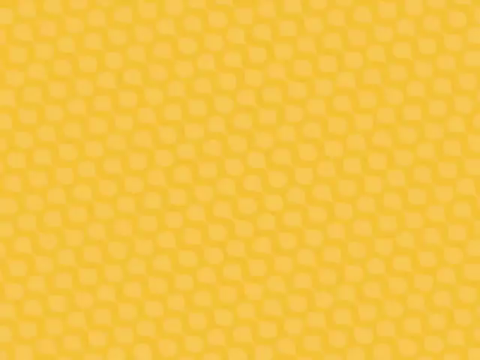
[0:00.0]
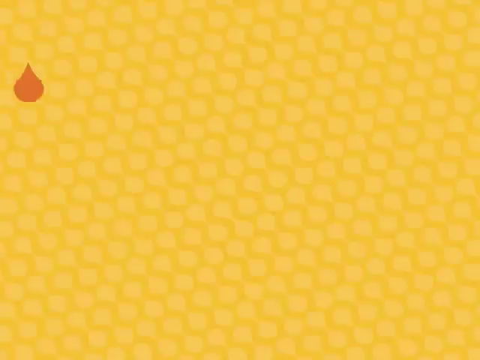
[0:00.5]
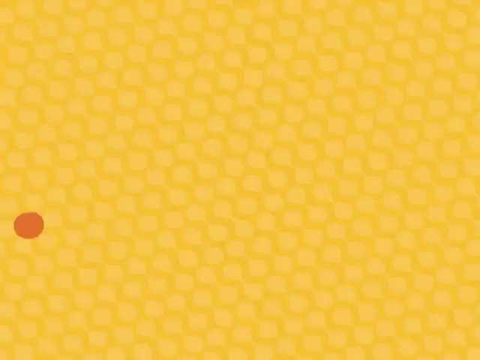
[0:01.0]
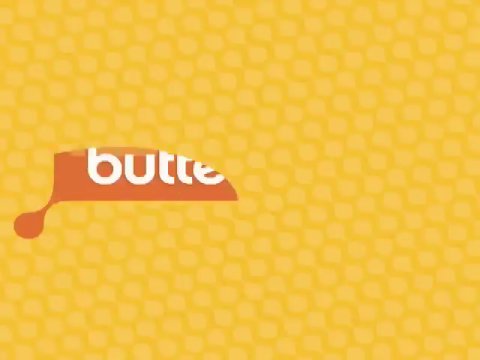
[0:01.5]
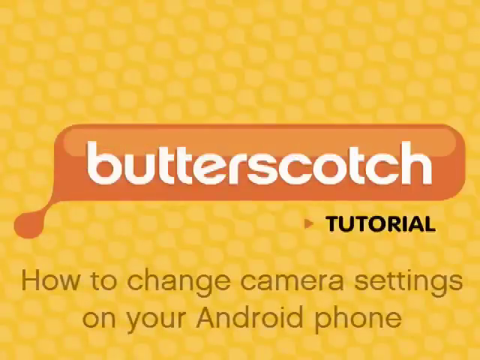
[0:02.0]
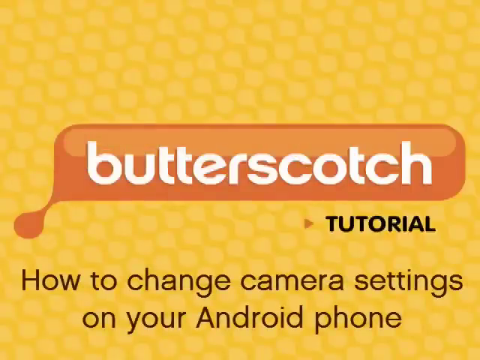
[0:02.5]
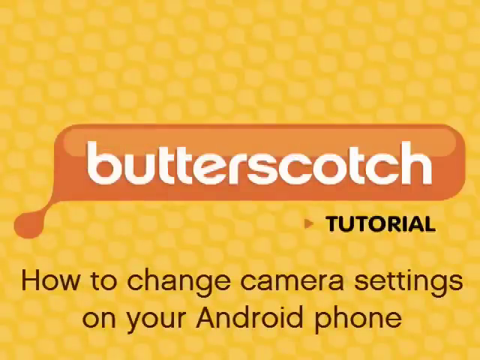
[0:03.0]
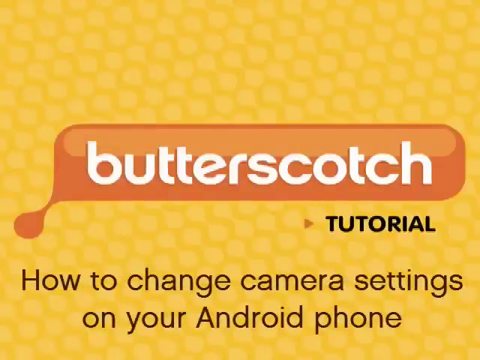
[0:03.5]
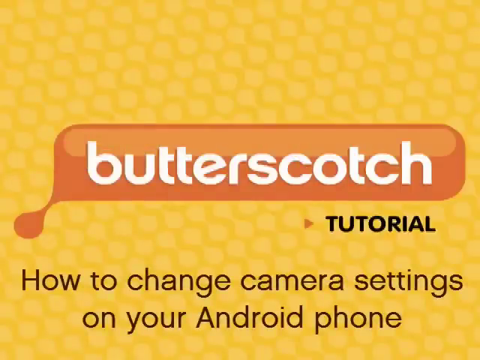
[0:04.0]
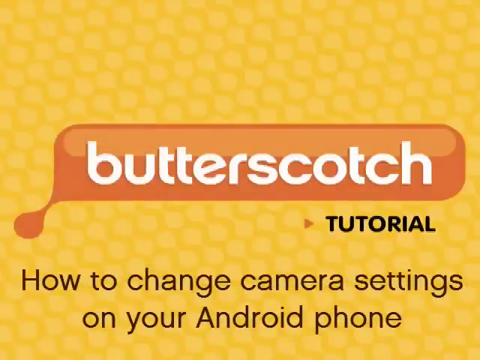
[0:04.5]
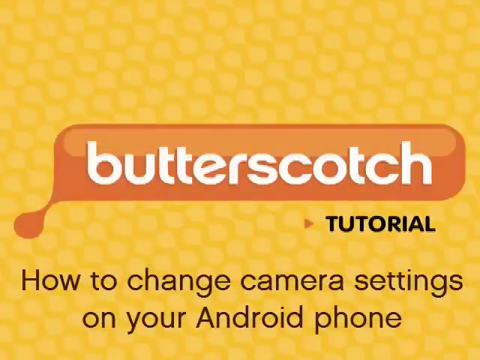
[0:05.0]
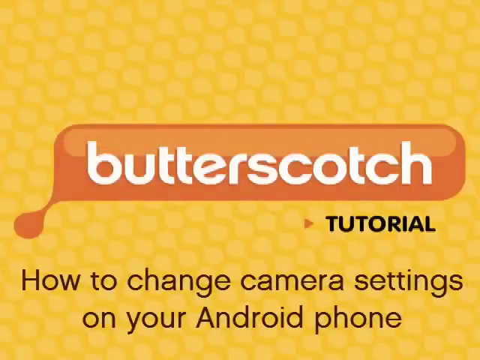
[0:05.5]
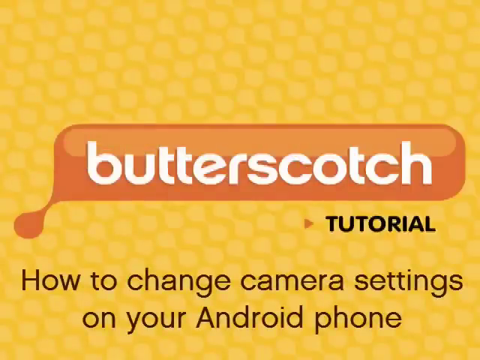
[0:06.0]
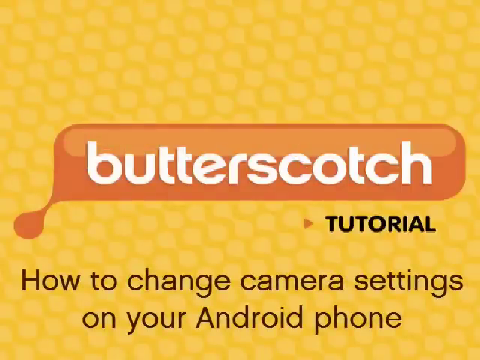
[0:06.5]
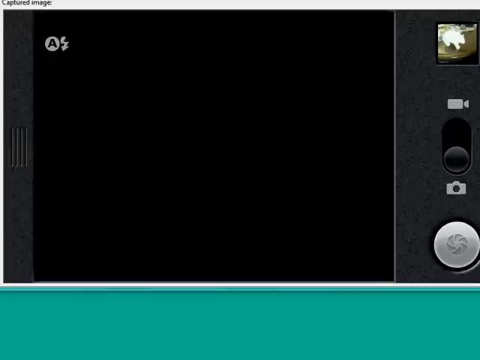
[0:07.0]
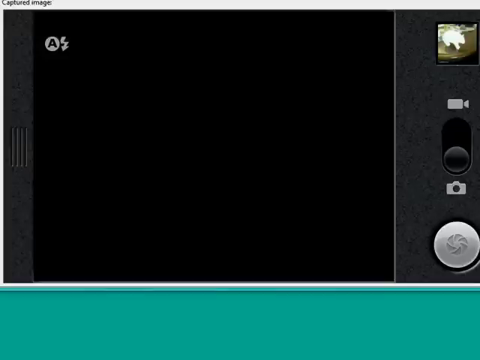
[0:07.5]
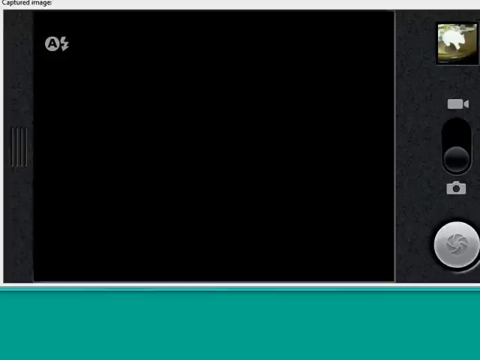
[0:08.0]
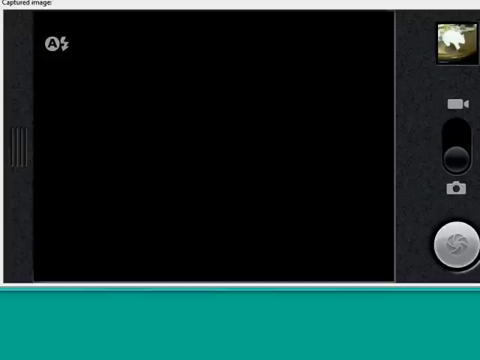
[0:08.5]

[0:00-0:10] The video opens on a yellow gold background covered in small circular dots connected one to the other, filling the entire page. A small brownish gold teardrop falls from the top of the screen toward the bottom, and when it reaches the lower two-thirds of the screen it stops and a thought bubble expands out, showing the word "butterscotch" in white font on a brown background. Underneath the butterscotch label is a tutorial button with an arrow next to it, and text at the bottom of the screen reads "how to change camera settings on your android phone." This text stays on screen for approximately four seconds before a transition brings a camera interface onto the screen.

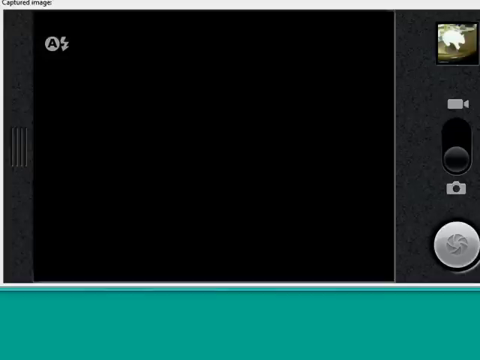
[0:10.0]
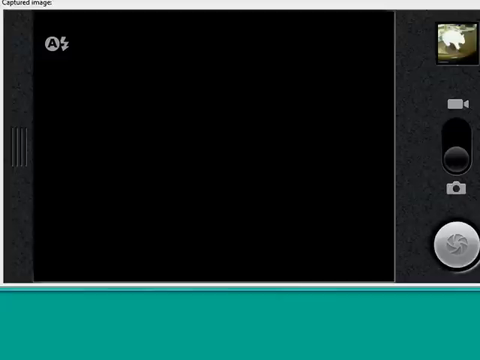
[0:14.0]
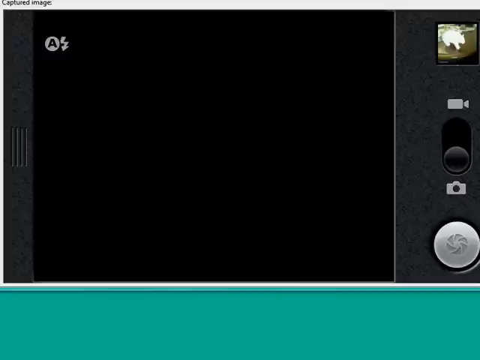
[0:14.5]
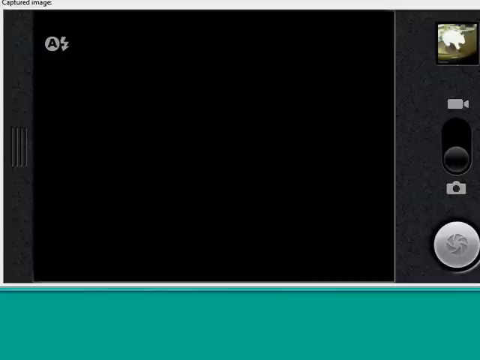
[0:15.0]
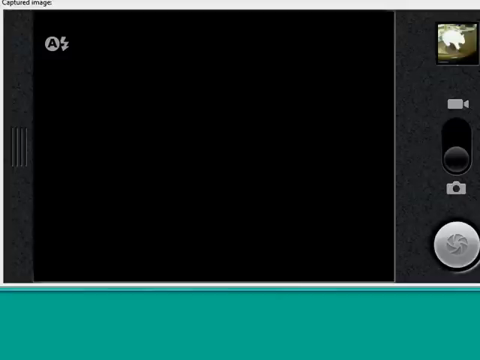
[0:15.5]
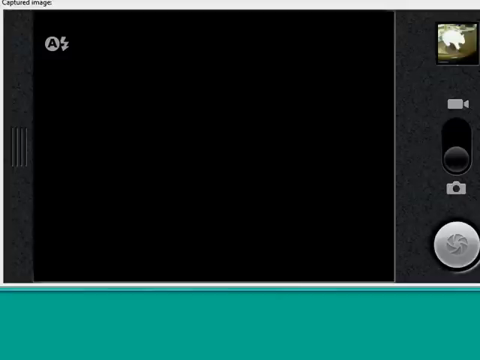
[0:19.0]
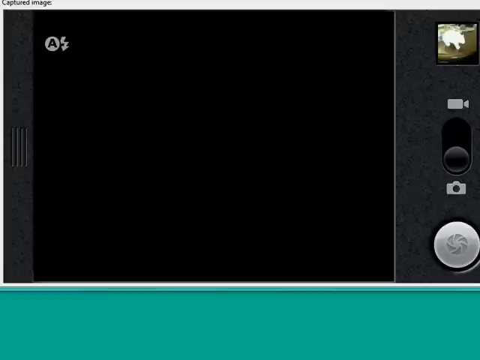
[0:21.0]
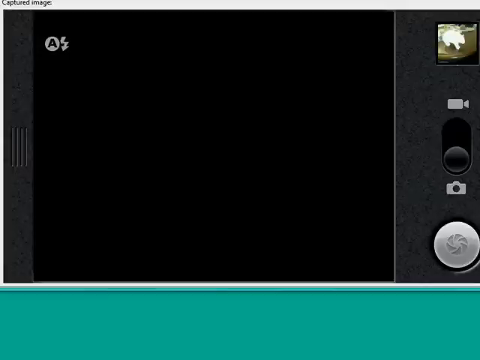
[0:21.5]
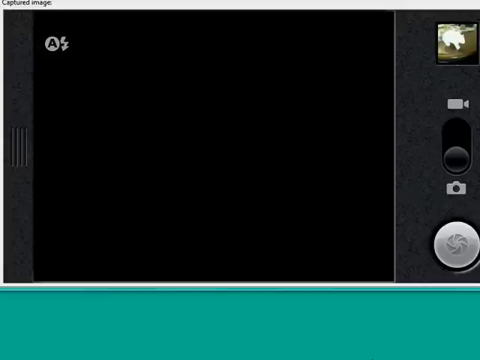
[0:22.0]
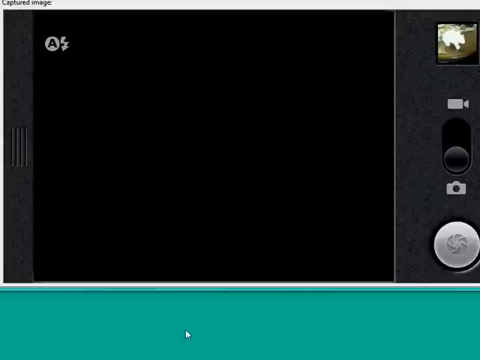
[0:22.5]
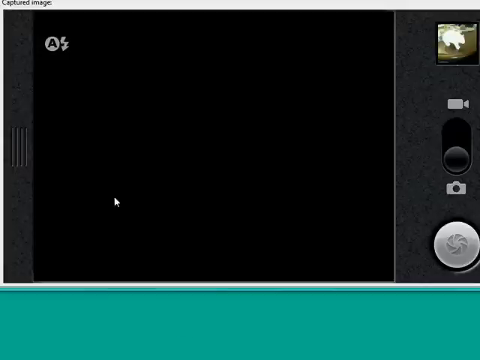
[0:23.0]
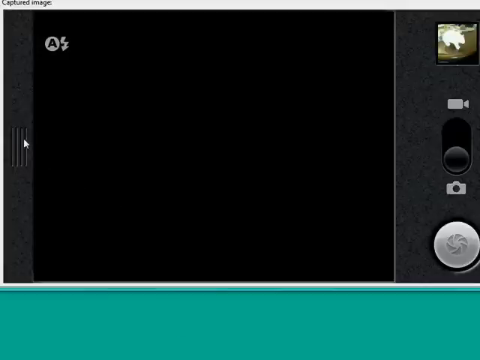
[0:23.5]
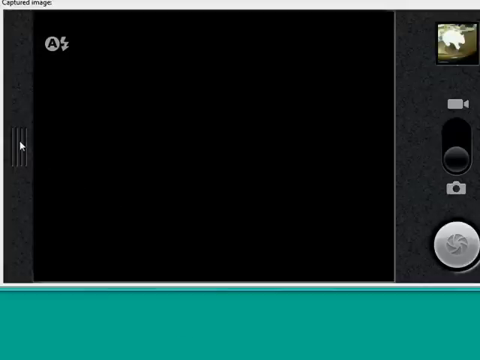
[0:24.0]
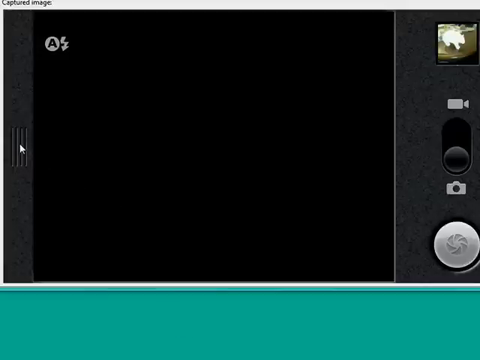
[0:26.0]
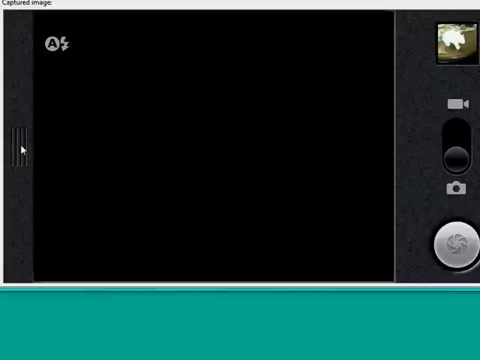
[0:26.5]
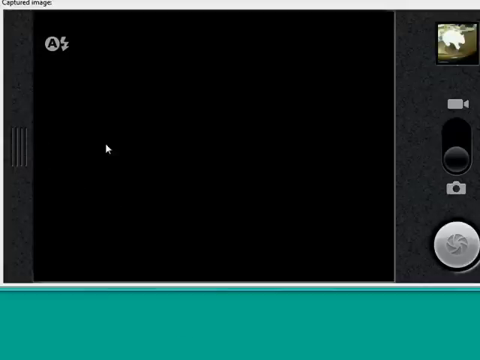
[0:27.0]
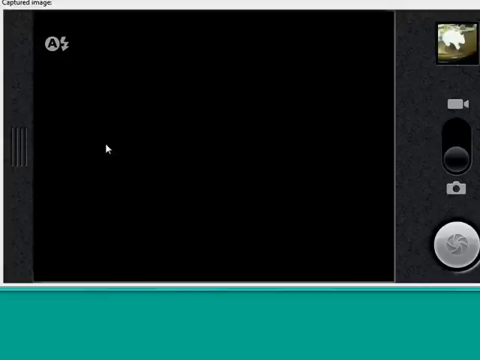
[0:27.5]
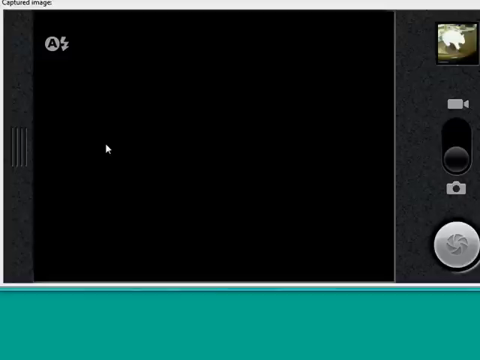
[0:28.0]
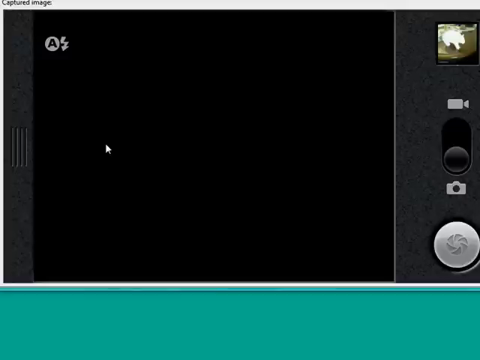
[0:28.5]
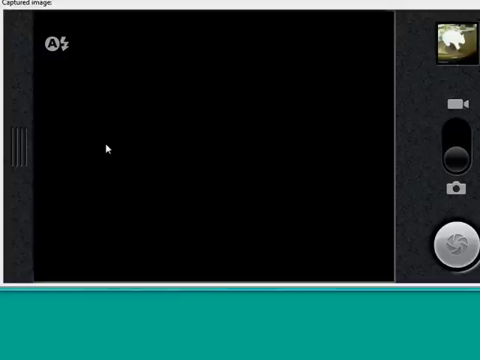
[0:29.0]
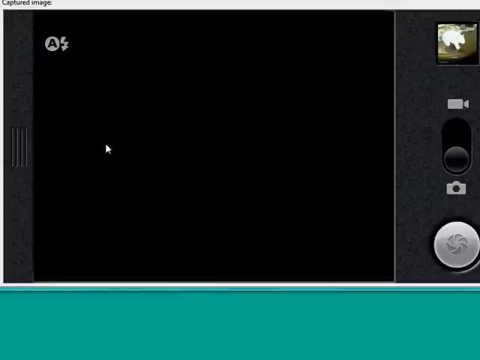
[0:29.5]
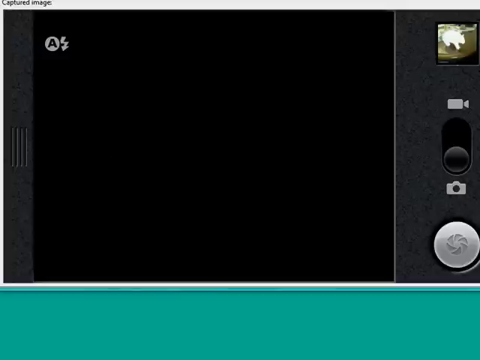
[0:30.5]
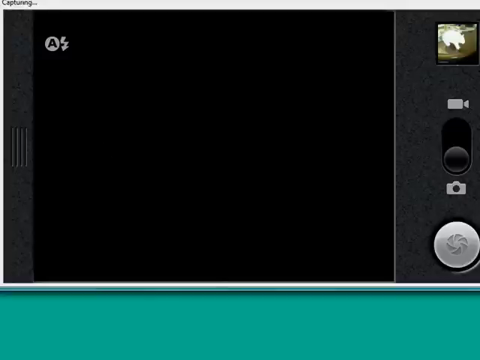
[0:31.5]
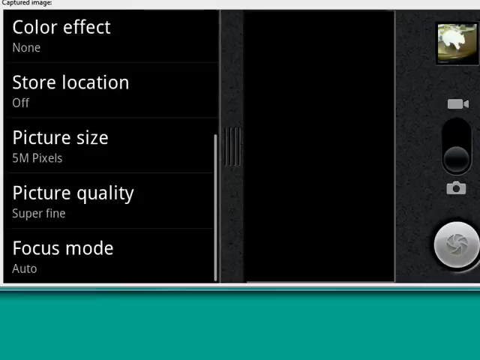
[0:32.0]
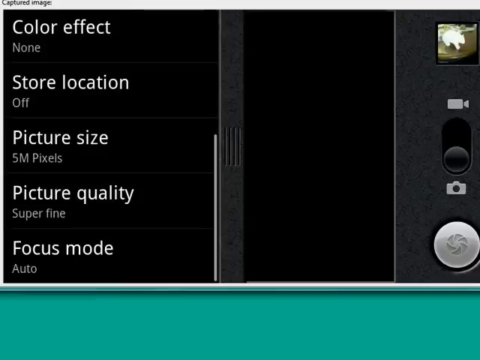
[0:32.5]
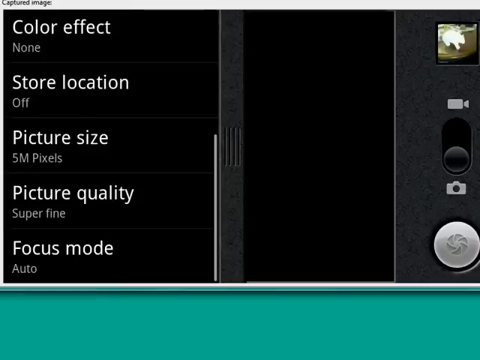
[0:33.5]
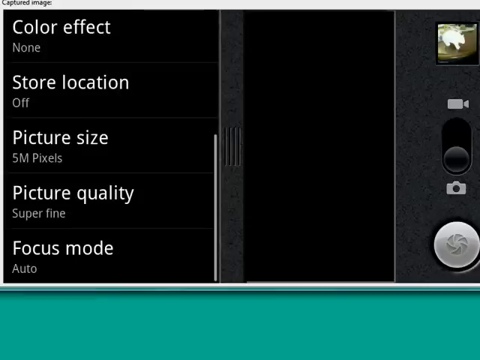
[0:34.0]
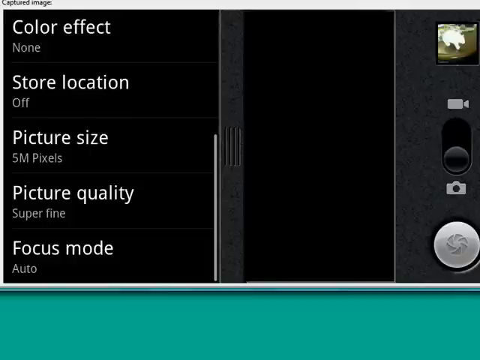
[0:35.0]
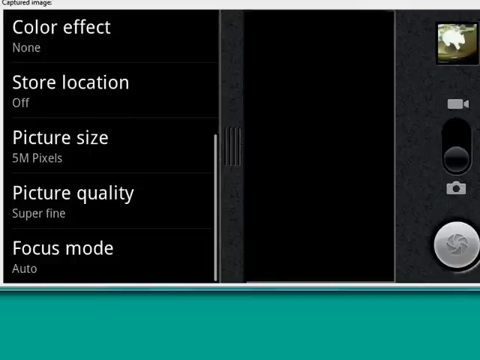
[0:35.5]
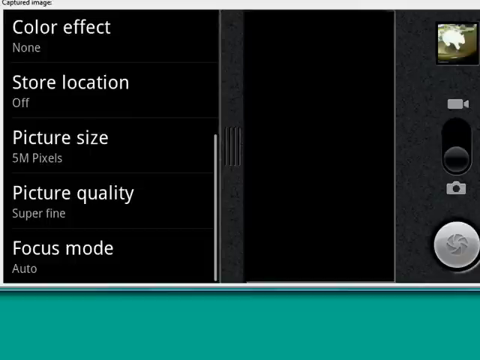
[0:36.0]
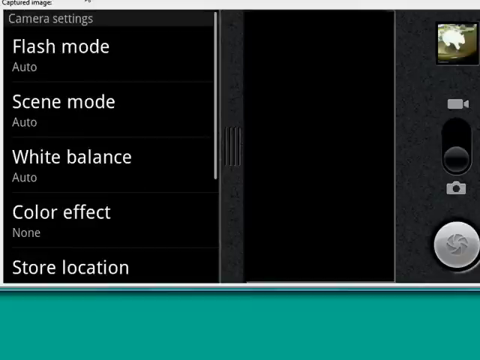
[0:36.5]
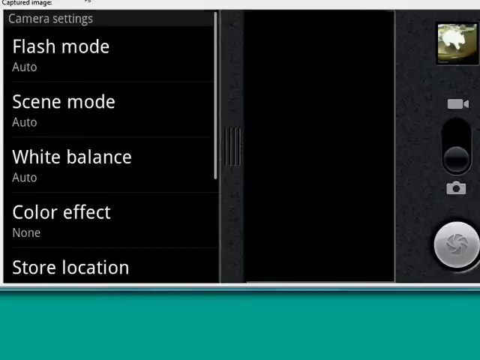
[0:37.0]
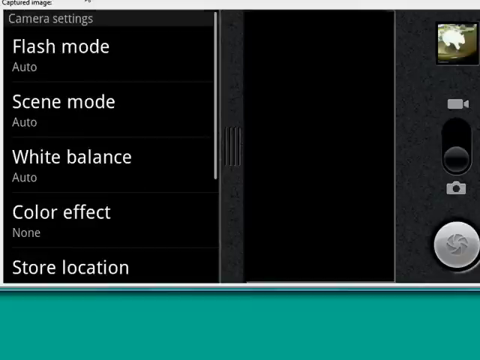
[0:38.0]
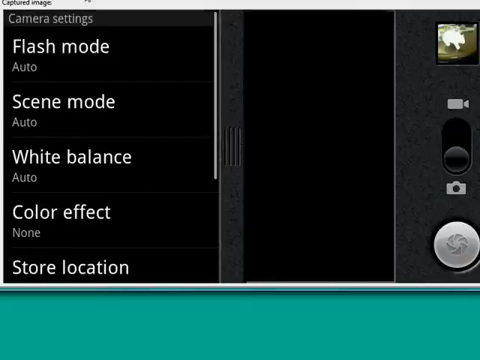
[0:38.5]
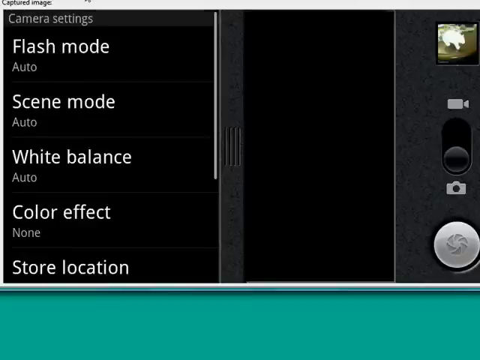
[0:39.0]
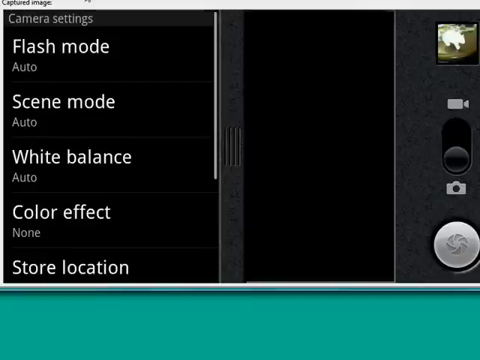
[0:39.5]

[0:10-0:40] A camera application's interface fills the screen. The bottom portion is a solid teal bar. The right side of the screen has a camera shutter button and a toggle switch for moving between camera and video recording, with the camera icon on the bottom side of the toggle and a camcorder icon at the top. The top right section appears to be a preview of a previously taken picture, and the top left has an automatic flash toggle. A mouse pointer icon moves on the left-hand side of the interface before moving to the top left. The icon is clicked off screen, and more camera setting options expand along the left side border: color effect with none selected, store location, picture size with 5 megapixels selected, picture quality at superfine, and focus mode set to auto.